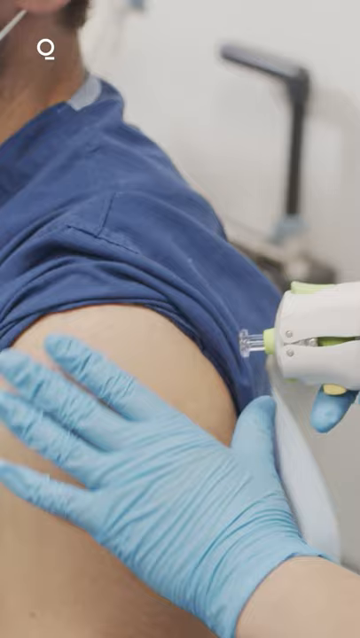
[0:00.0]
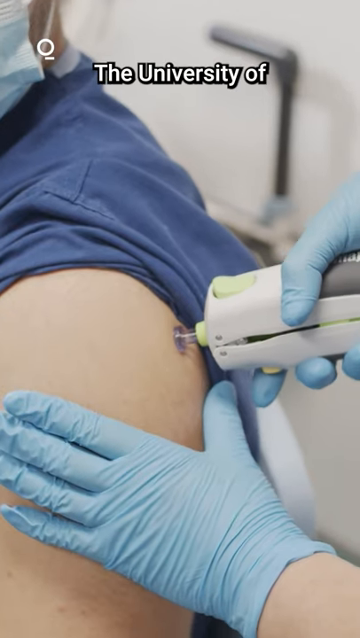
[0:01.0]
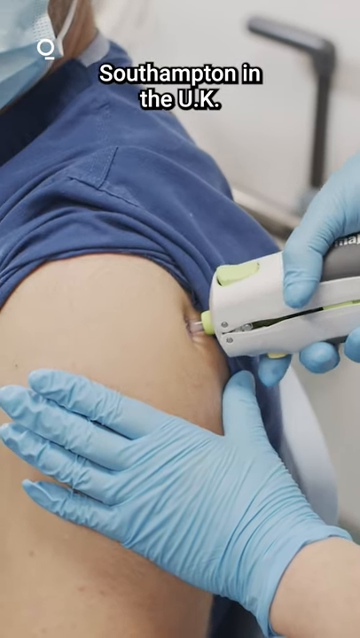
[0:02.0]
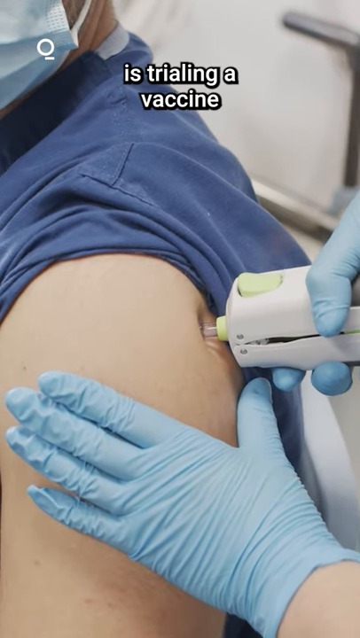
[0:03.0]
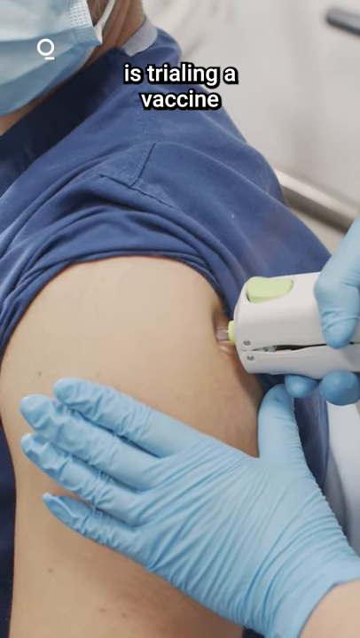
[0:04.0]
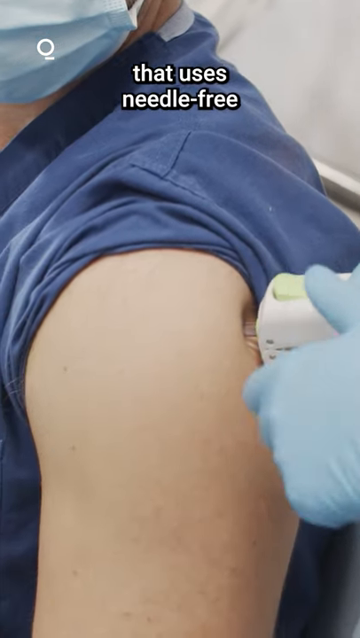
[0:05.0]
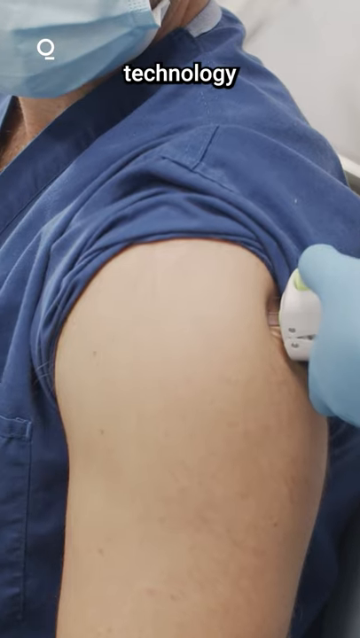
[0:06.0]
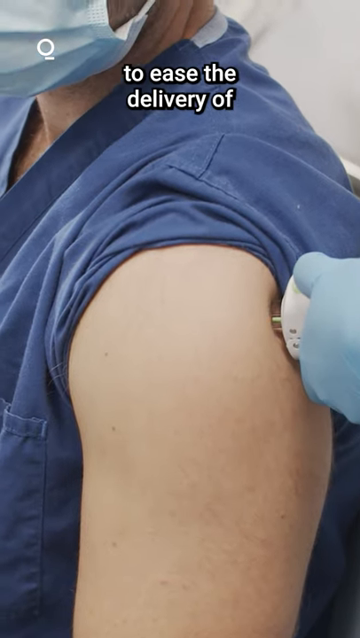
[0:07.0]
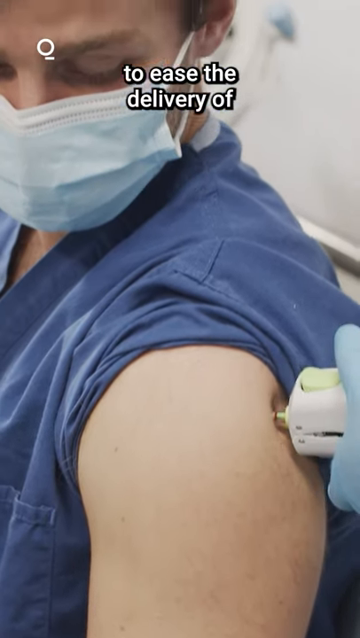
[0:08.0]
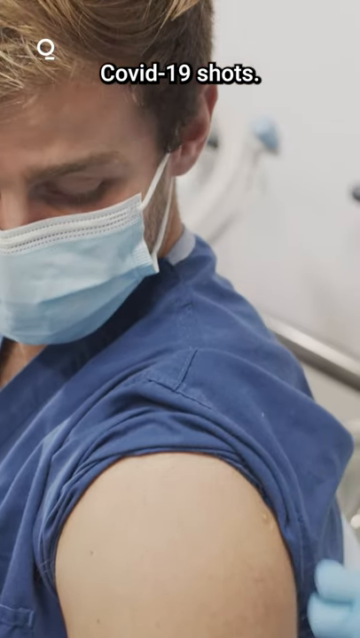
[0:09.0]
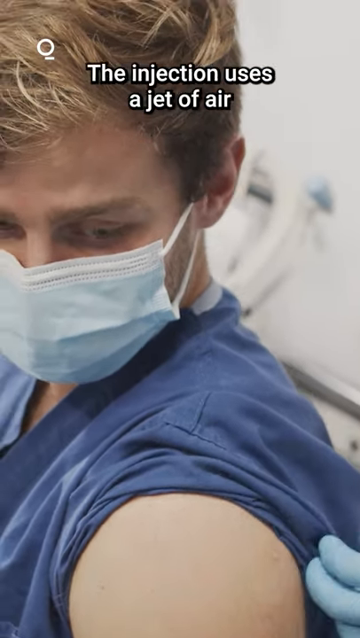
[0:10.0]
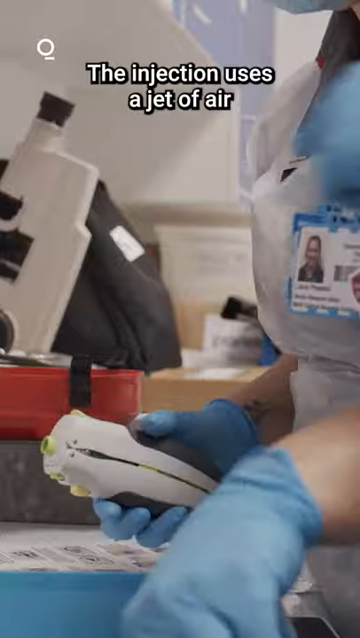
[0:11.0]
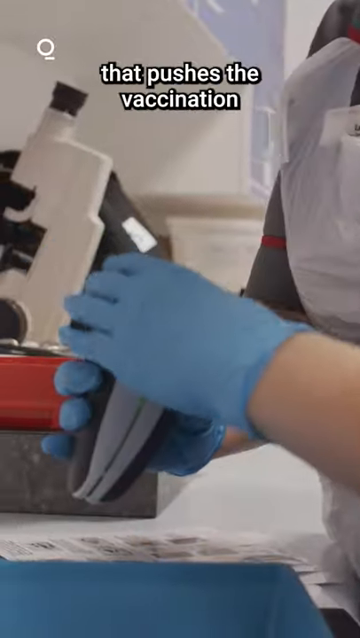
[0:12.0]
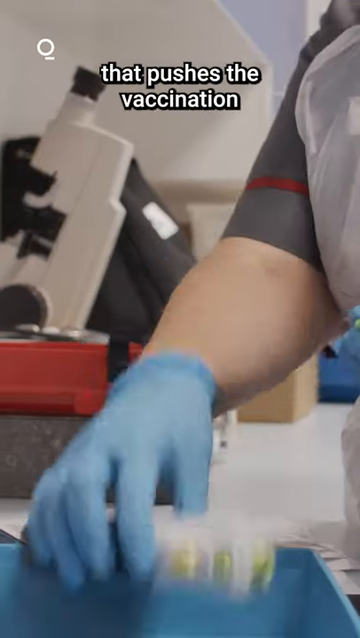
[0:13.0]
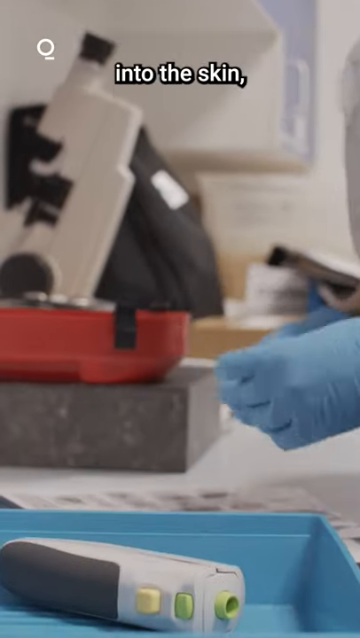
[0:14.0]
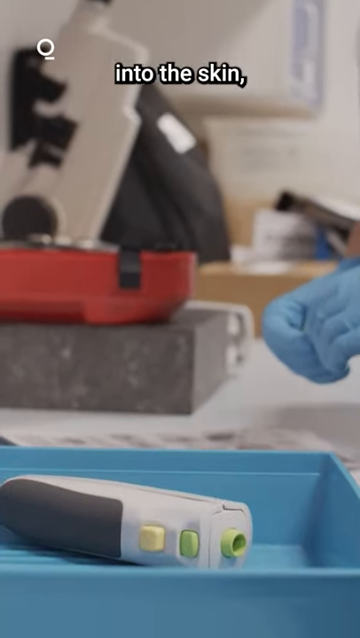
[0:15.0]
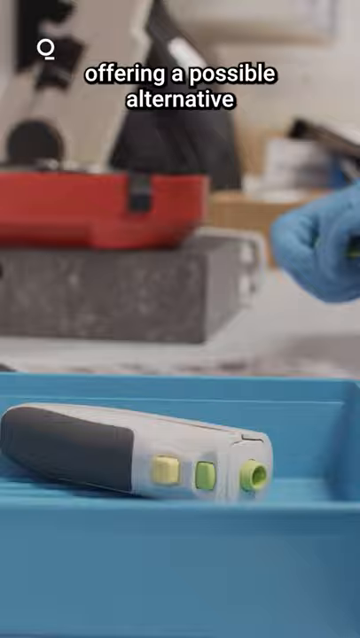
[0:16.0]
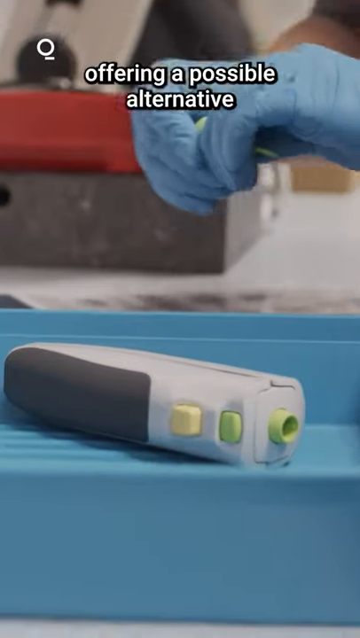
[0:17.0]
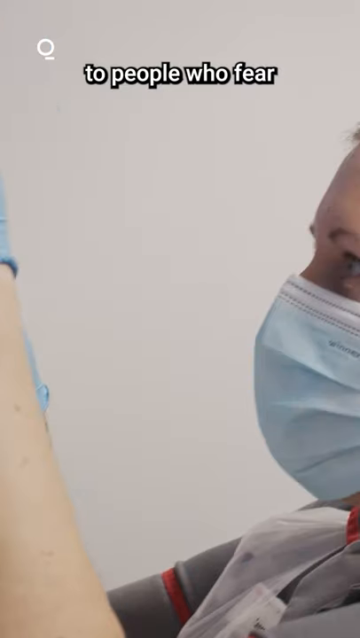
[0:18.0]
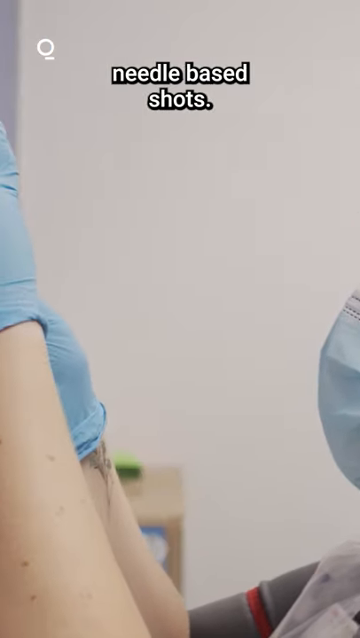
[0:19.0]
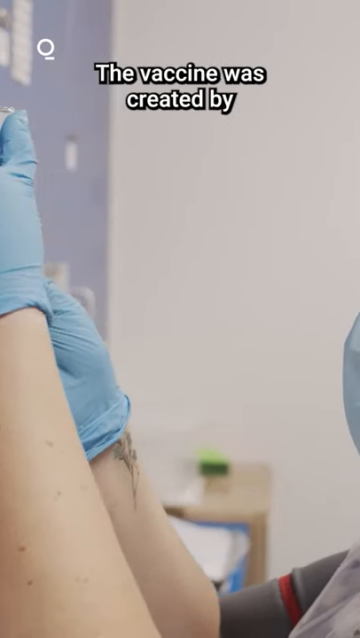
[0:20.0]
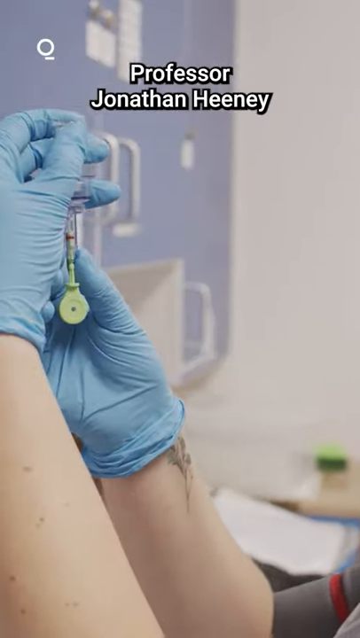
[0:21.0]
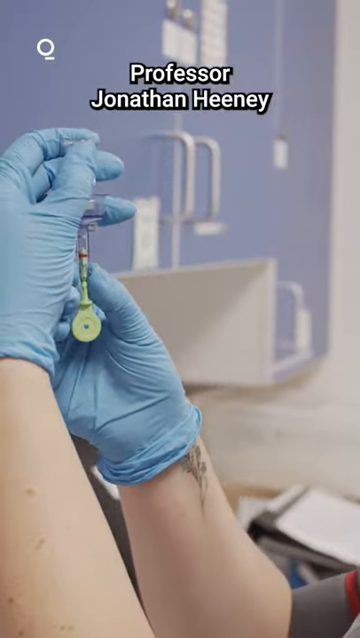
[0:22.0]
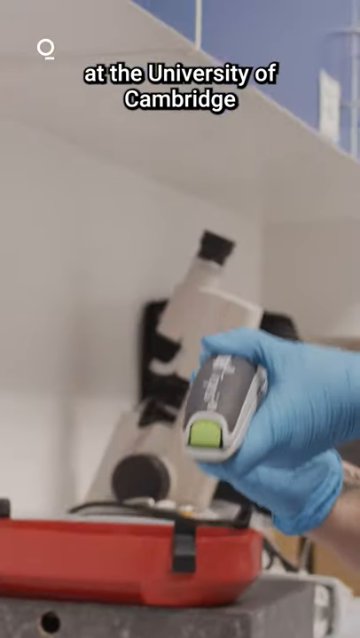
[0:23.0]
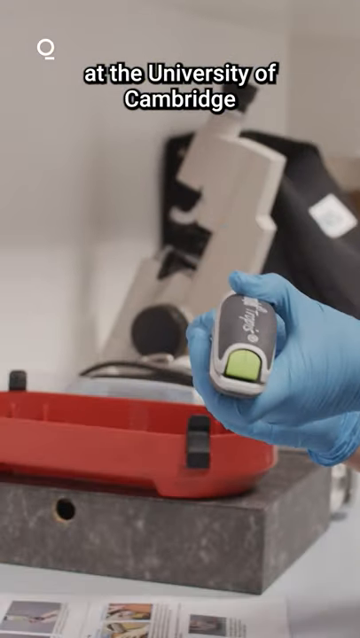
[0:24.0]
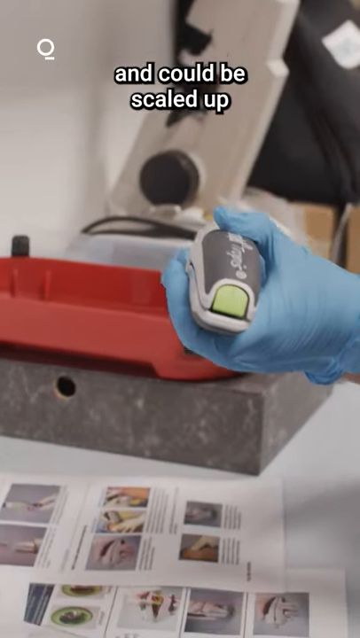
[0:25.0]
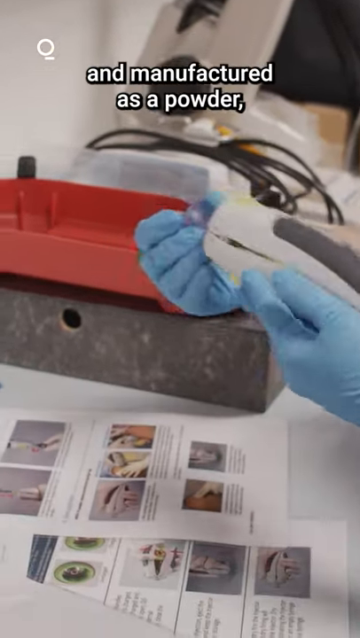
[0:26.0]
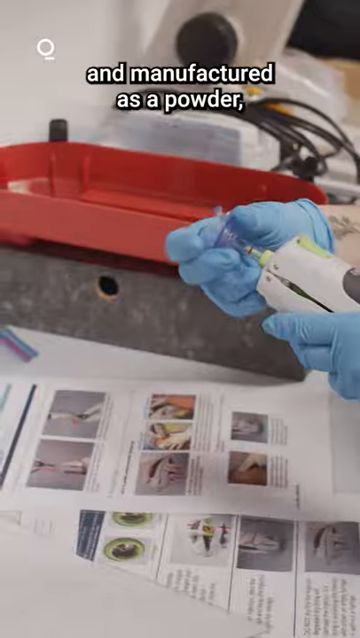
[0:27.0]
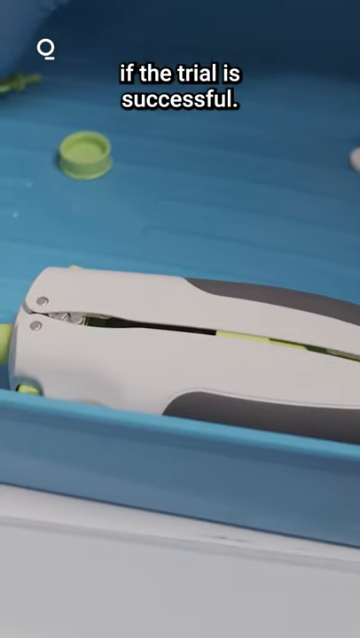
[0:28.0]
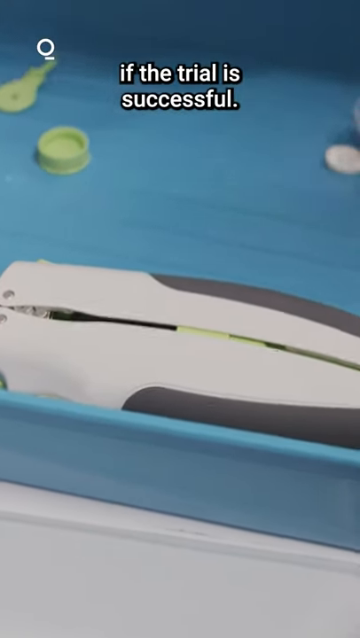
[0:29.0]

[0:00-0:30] A close-up shows an arm that appears to be a man's, with a blue sleeve pulled up to the shoulder. In the bottom right there is a blue gloved hand, and another gloved hand above it holds some sort of device up to the man's shoulder. The device is white and lime green and has a tip. The man turns to look at the person behind him holding the device. The person leans the device into his skin, leaving a visible indentation, and presses a button on the top, delivering a shot. The camera pulls out to reveal a man with blonde hair. He looks down at the shoulder where the shot was given as the person with the gloves pulls the device away. The scene moves to the counter of what looks like a laboratory, with telescopes and other medical equipment in the background and matting and trays in the foreground. To the right is a woman in a white lab coat, the woman with the gloves, and her ID is visible. She holds the instrument she used to deliver the shot, then puts it into a bin while marking it. The video cuts to the same woman dosing a shot for the next person and showing the piece of machinery she used to do so.